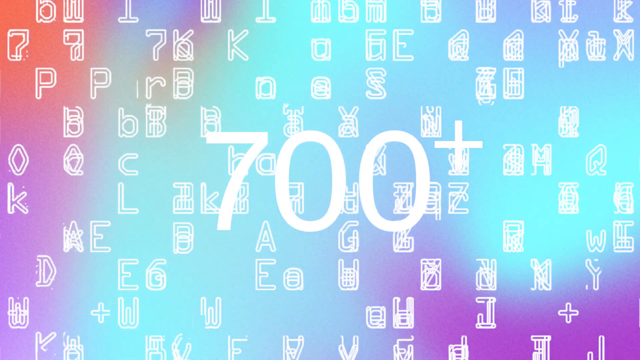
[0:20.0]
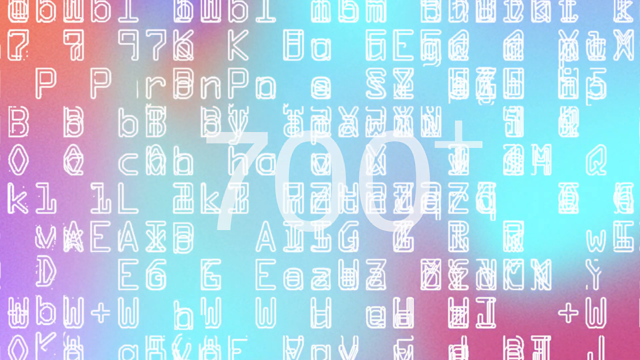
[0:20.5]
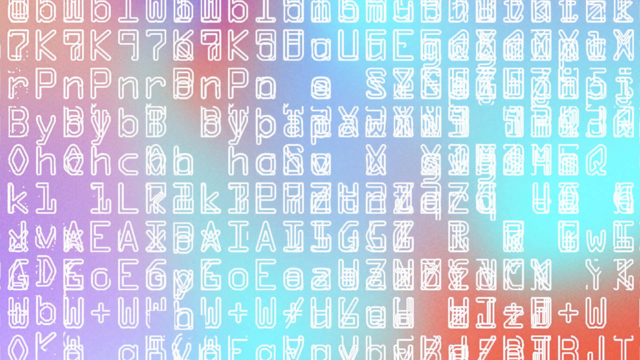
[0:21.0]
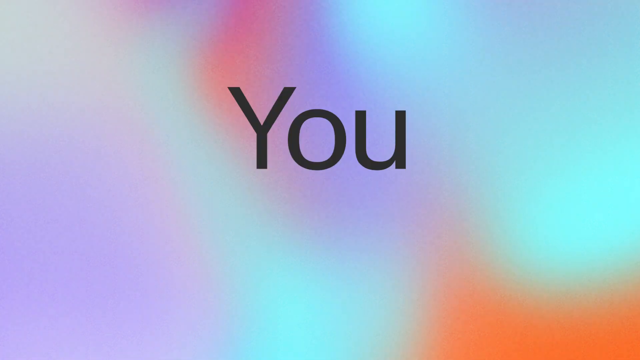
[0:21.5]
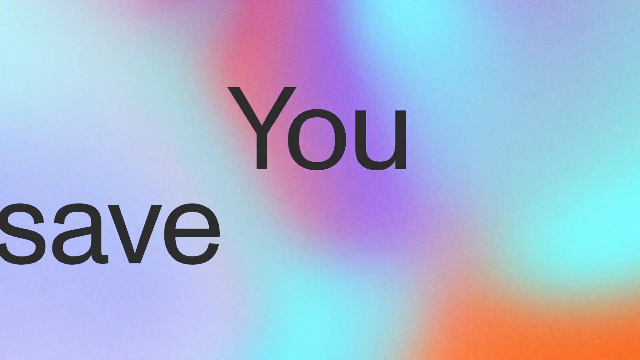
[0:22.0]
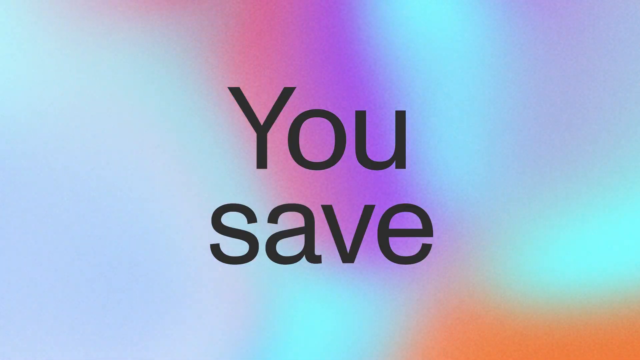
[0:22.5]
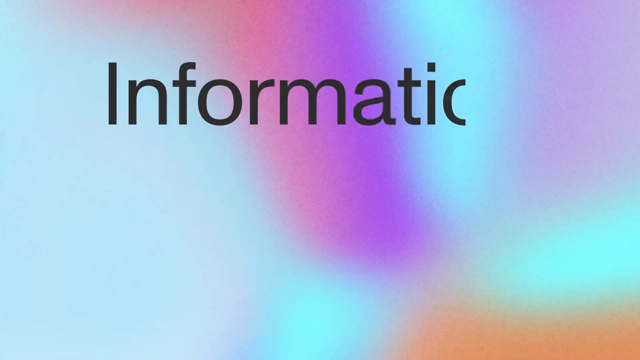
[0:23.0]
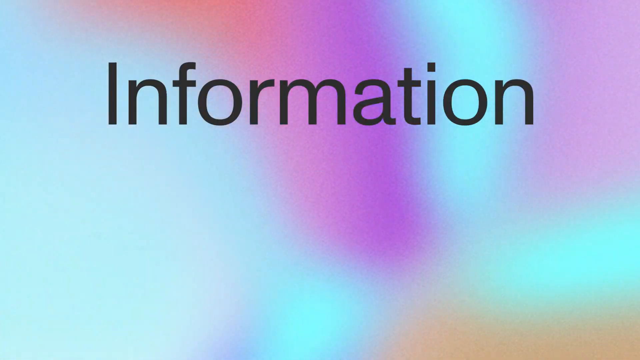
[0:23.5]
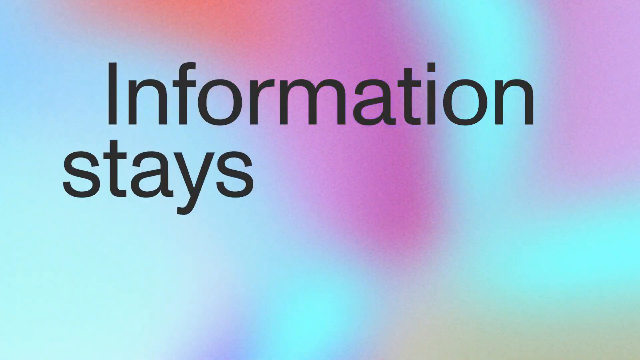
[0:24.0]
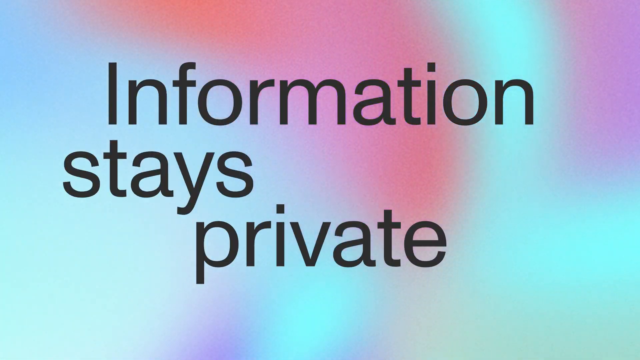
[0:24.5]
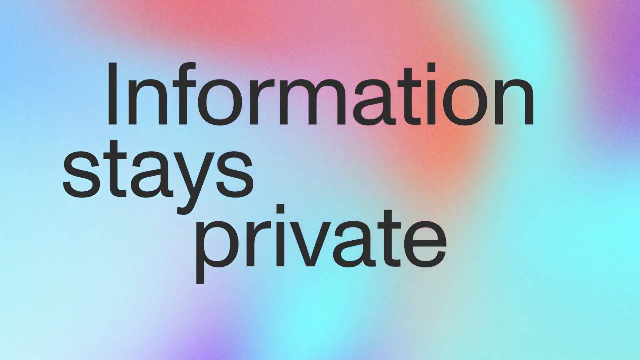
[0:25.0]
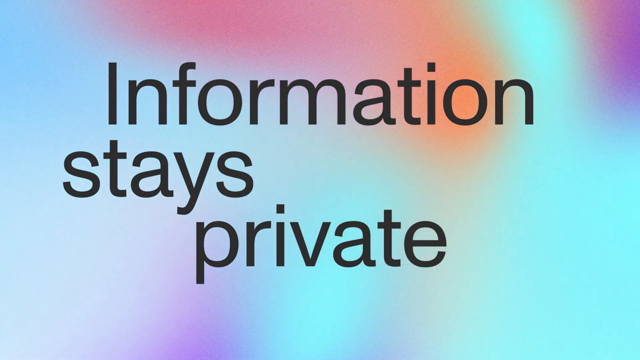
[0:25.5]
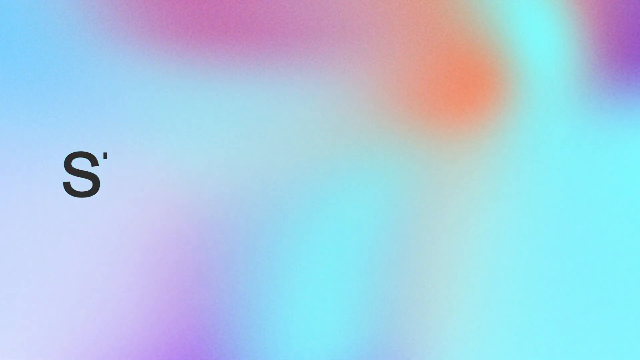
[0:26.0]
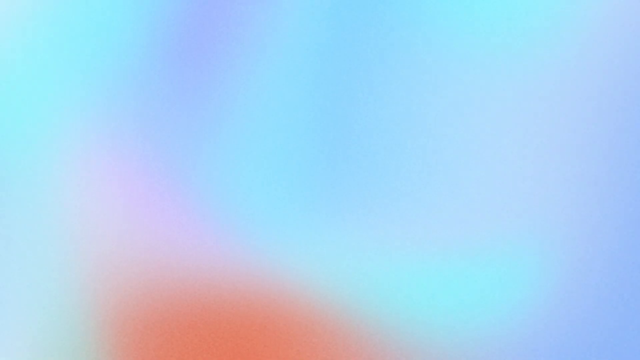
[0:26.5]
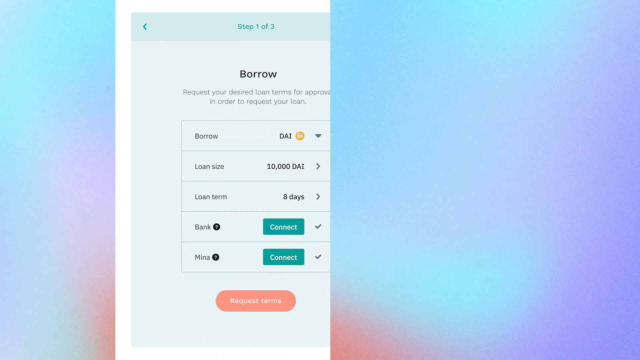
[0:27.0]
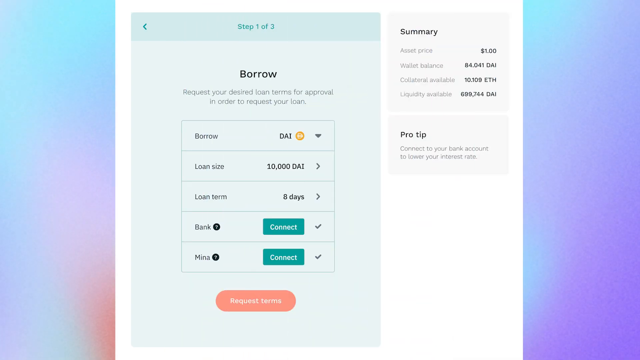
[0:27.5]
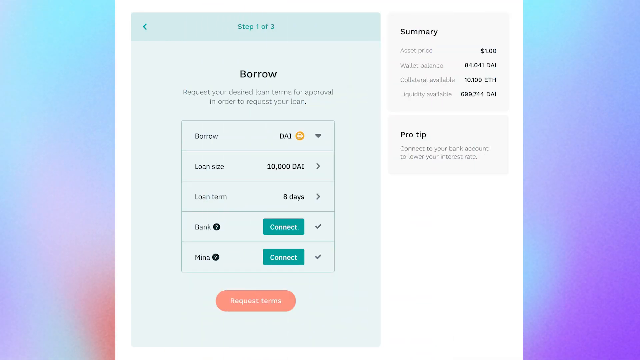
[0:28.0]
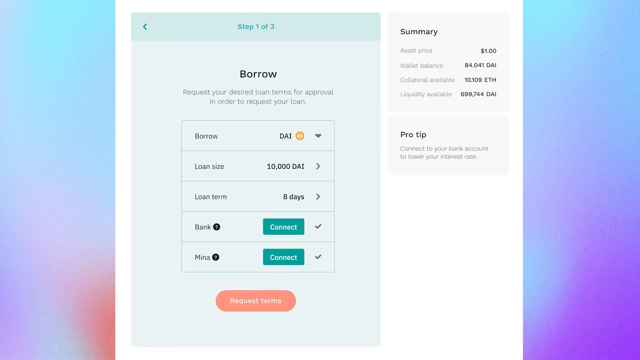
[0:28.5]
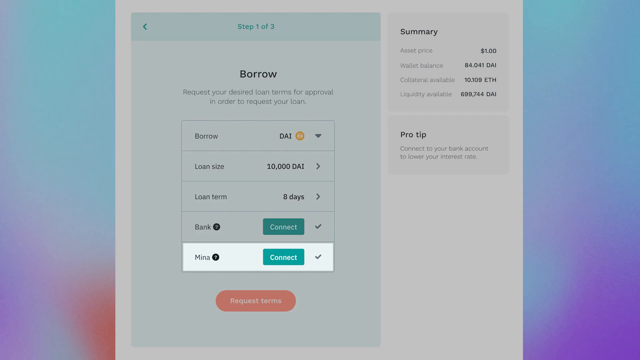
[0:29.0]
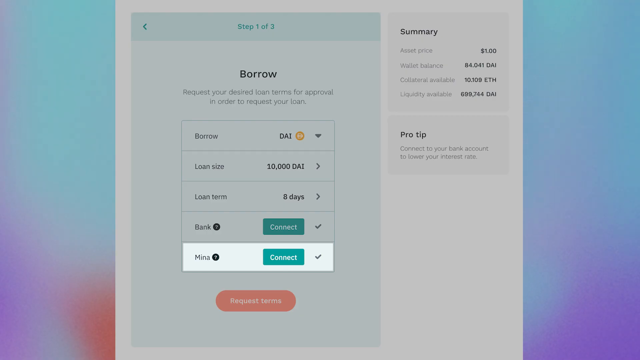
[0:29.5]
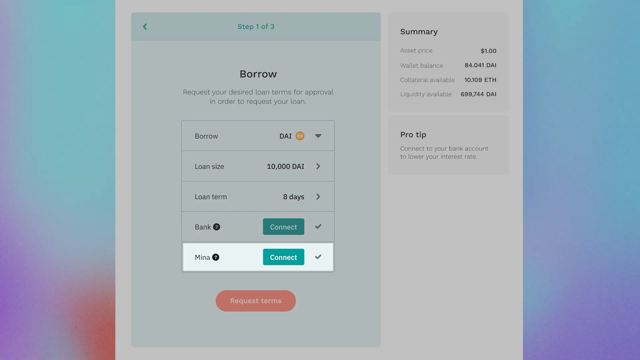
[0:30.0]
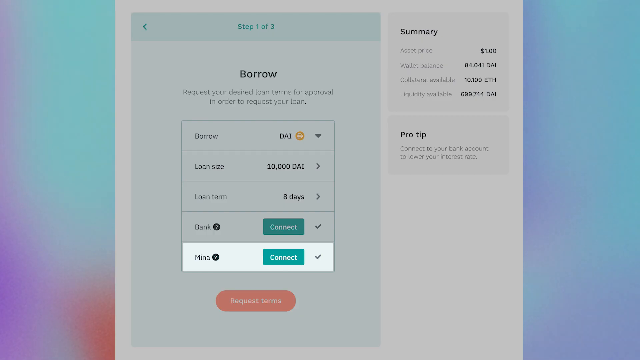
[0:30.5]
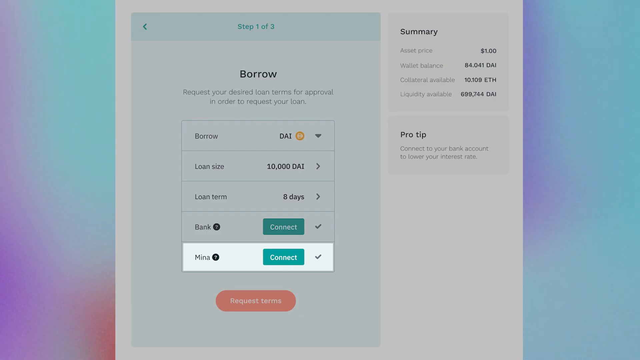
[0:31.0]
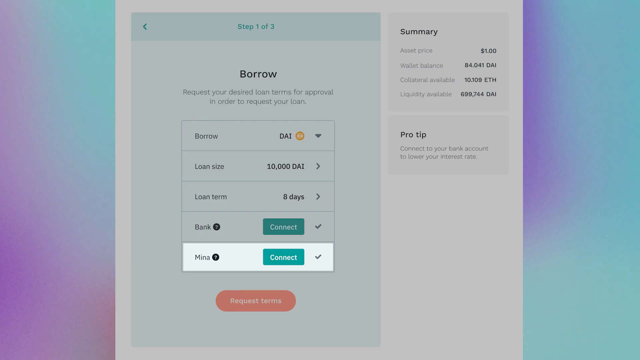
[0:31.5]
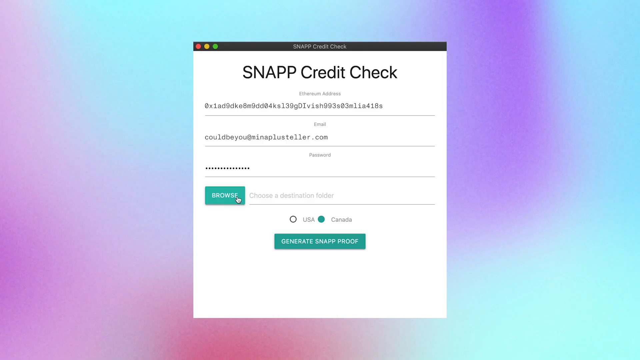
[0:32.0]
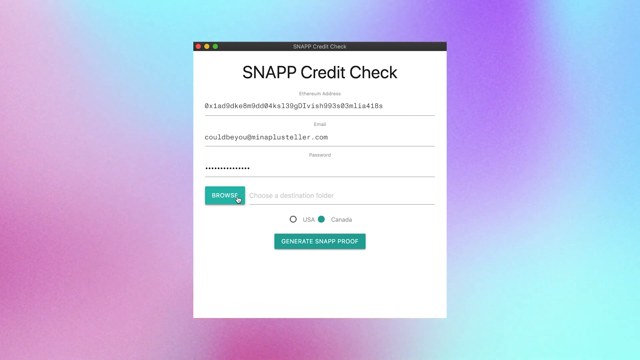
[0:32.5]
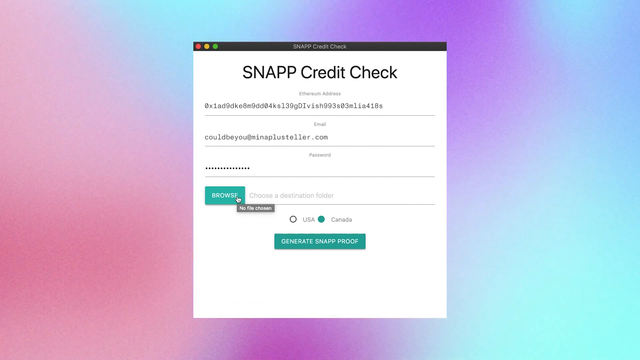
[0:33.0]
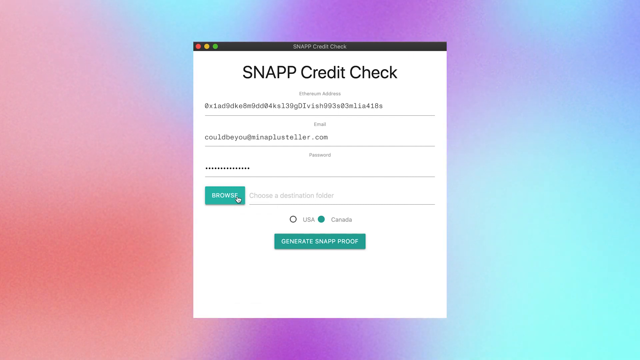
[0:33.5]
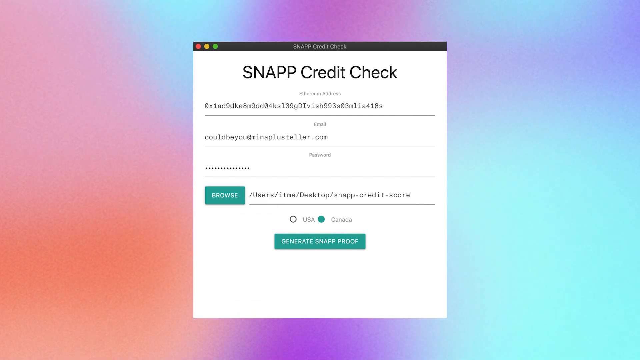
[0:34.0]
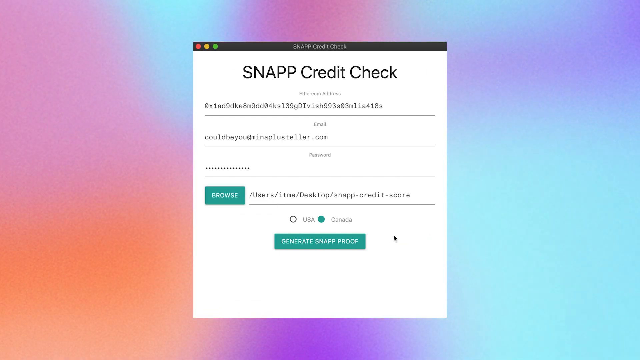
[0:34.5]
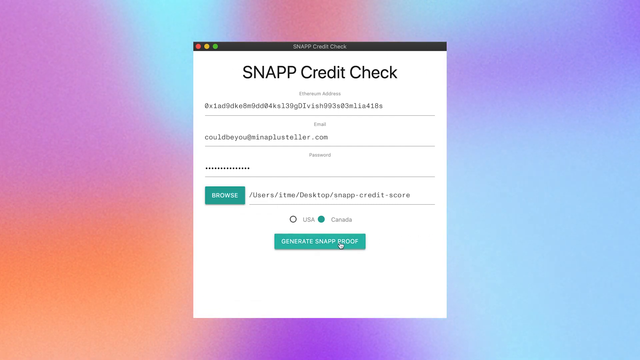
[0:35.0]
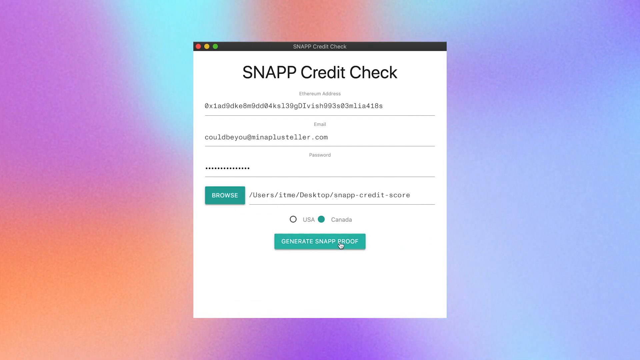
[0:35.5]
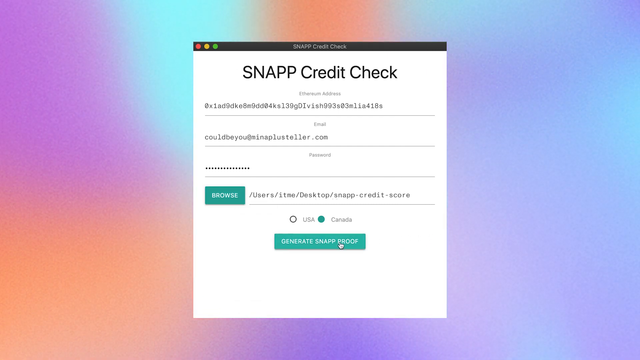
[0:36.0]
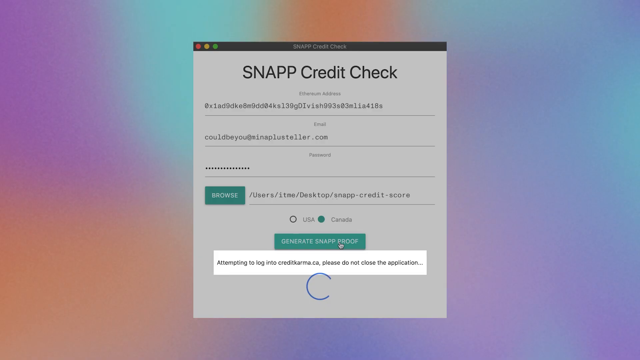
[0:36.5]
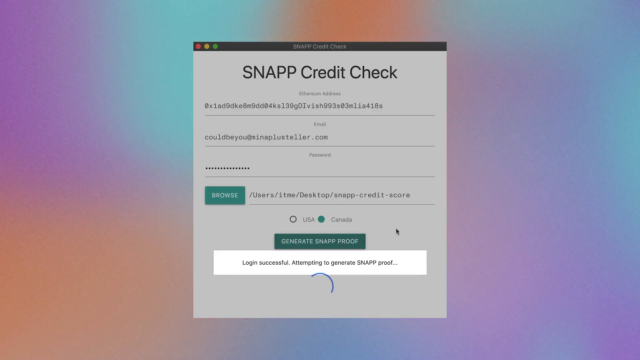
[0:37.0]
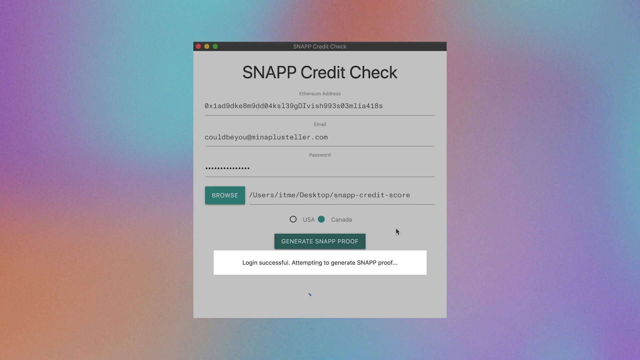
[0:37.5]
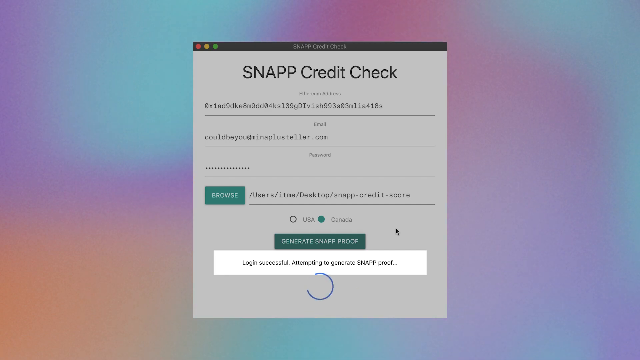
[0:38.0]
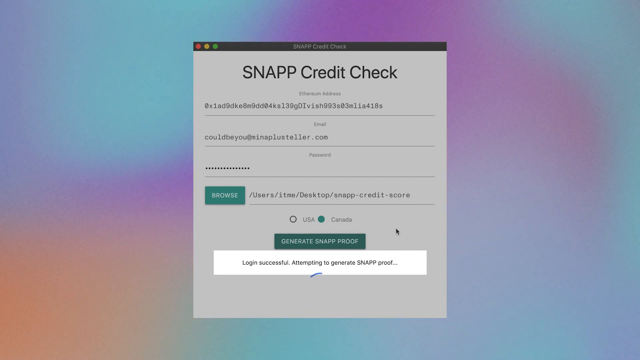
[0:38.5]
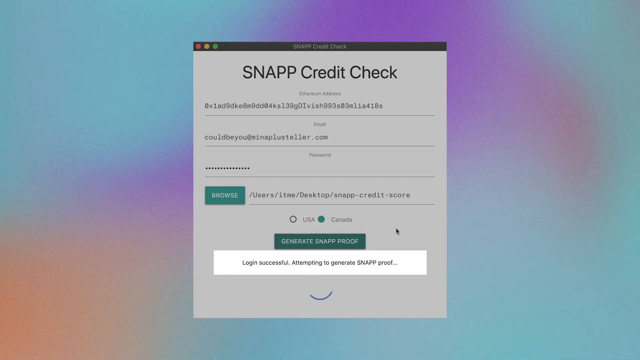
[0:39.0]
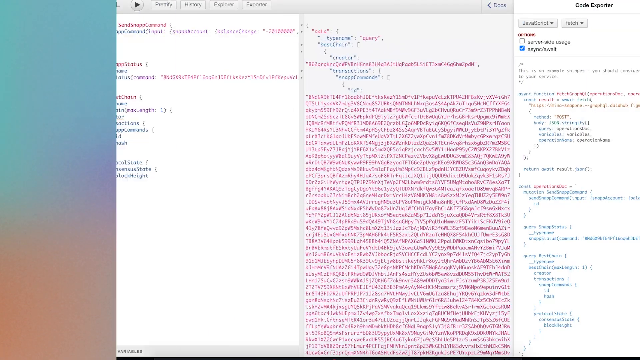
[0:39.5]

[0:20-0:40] An animated screen has a background in pastel shades of green intermingled with purple and orange. Several numbers and letter symbols in white form a decorative design on it. The white text vanishes, and words are written on the screen one by one in large black text: "you save information stays private." The text disappears and an application window appears, with "step one of three" written above the top of the window. The window is a pale green color on a white background on the colorful screen. Details on it include "summary" and "borrow" as well as loan amounts. The window then transitions to one with the header "snapp credit check," which has entry fields. A mouse cursor clicks a green button that says "generate snapp proof." A message pops up as the instruction is processed, along with a processing icon shaped like a circle outline. A page that looks like the back end of an XML or HTML page then appears on the screen.